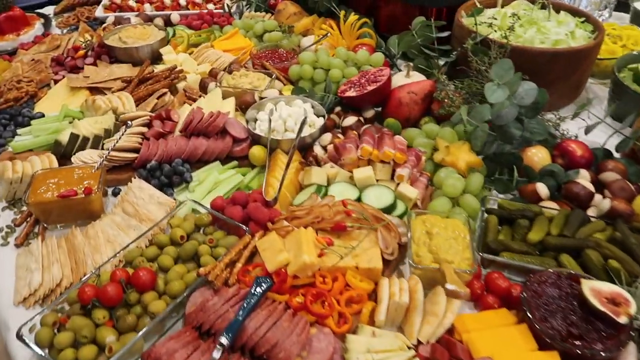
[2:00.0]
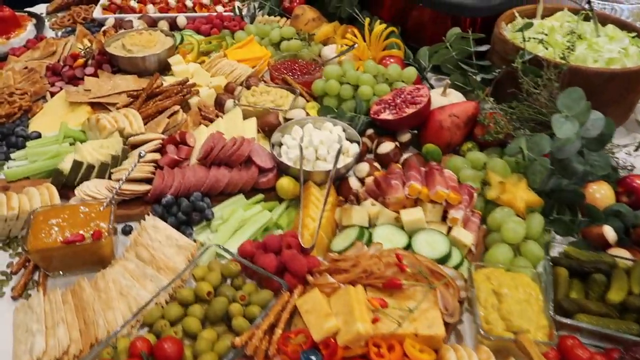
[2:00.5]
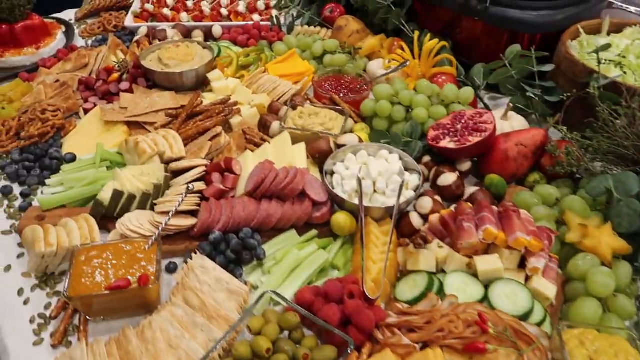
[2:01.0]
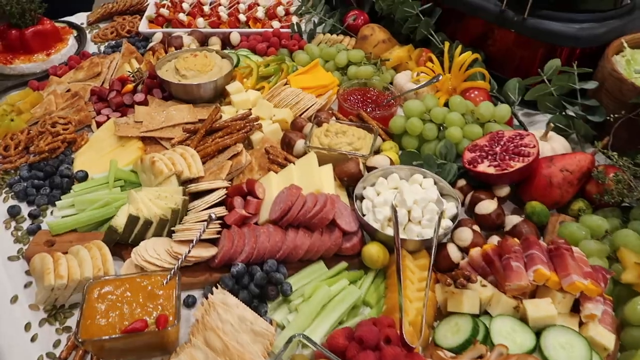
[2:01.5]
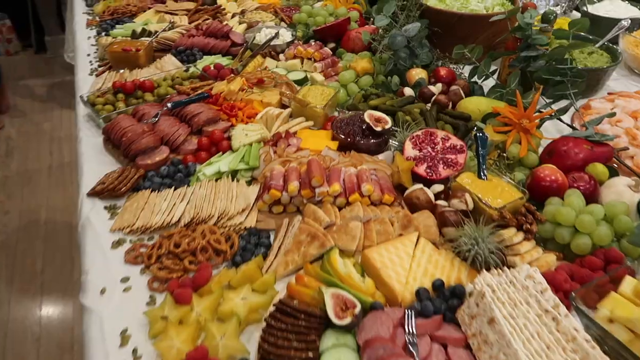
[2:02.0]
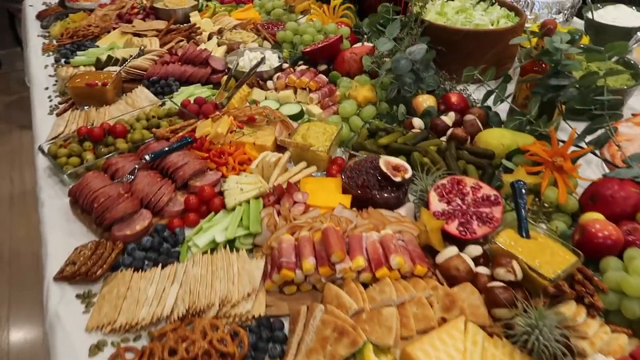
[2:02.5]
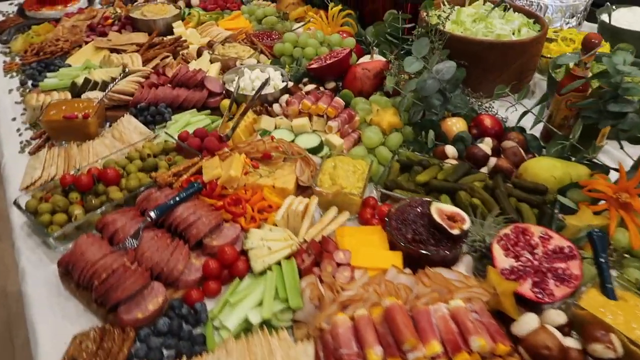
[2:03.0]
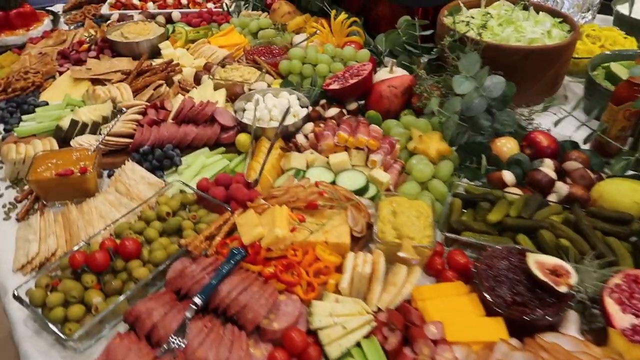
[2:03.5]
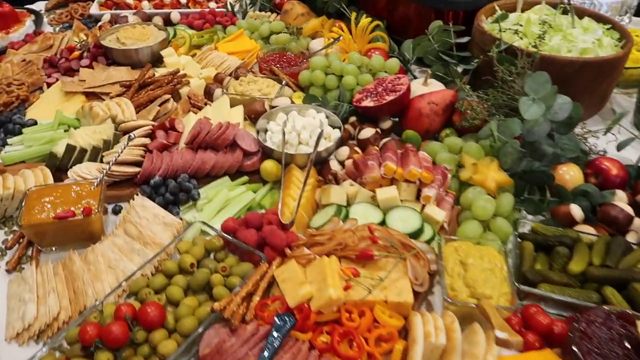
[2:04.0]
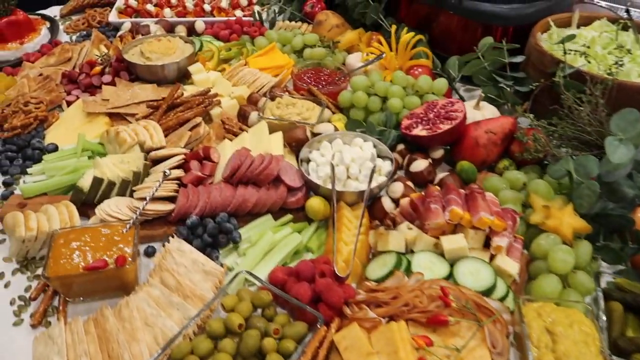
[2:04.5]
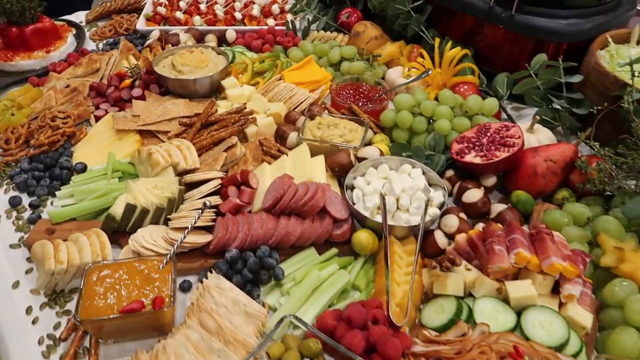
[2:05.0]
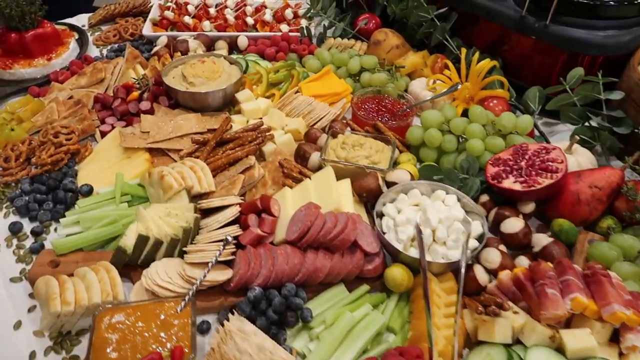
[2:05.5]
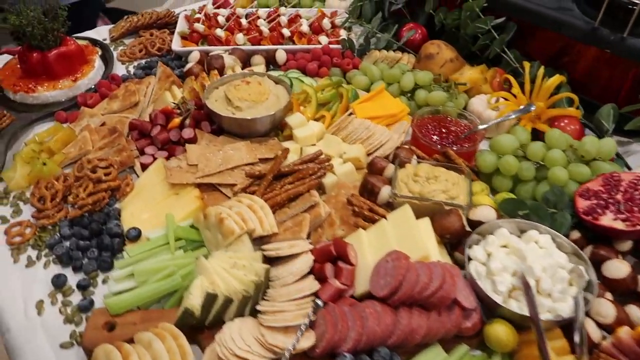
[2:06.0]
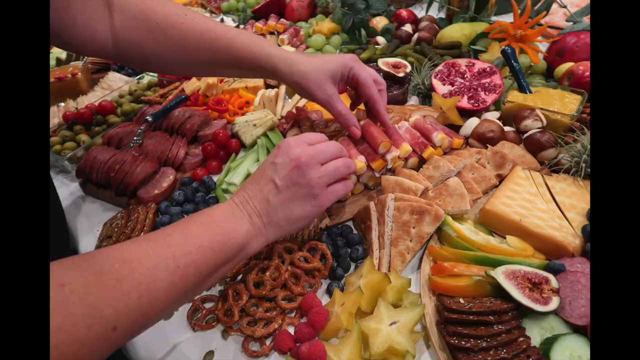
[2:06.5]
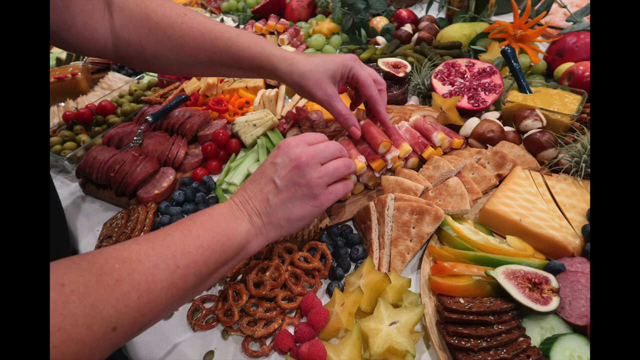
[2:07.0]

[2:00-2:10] The camera continues to zoom around the charcuterie table, showing various food items: cheese, and meats such as salami and prosciutto. The salami is neatly sliced and red. There are neatly sliced green cucumbers, light green celery sticks, and red tomatoes. Olives are placed inside a transparent Tupperware dish. A pomegranate has been opened, showing its interior with red-looking seeds.